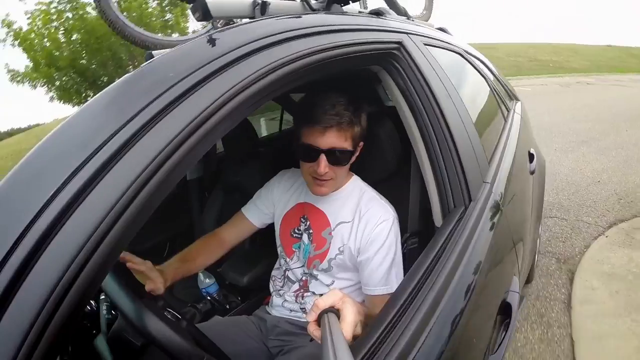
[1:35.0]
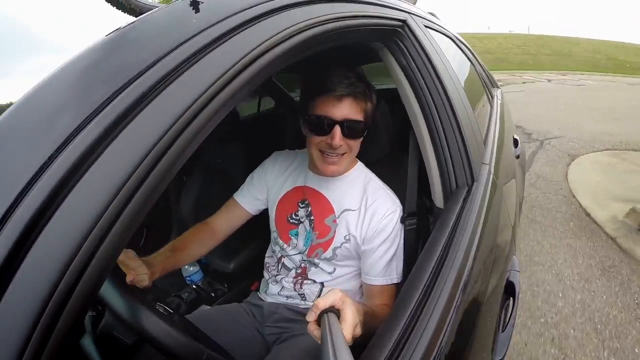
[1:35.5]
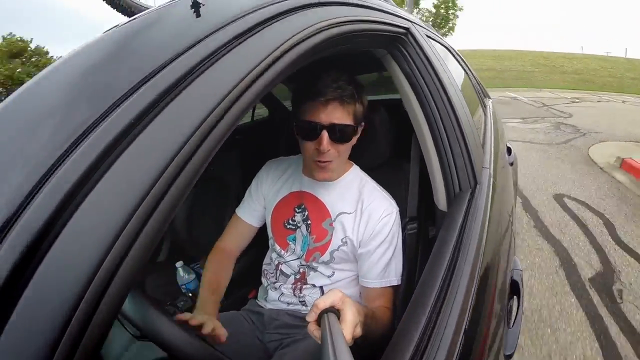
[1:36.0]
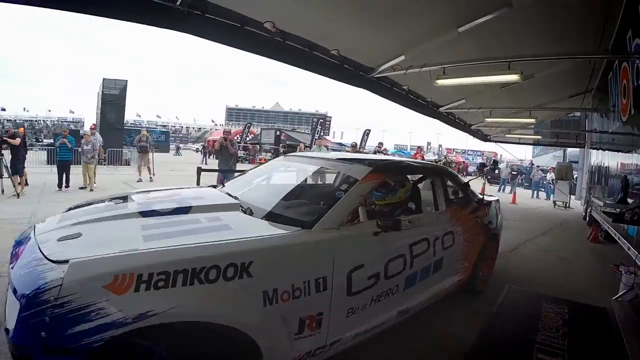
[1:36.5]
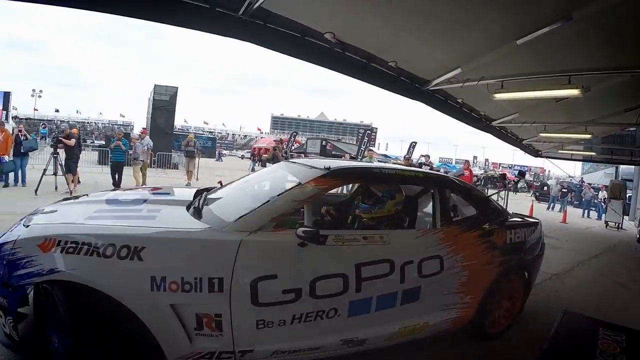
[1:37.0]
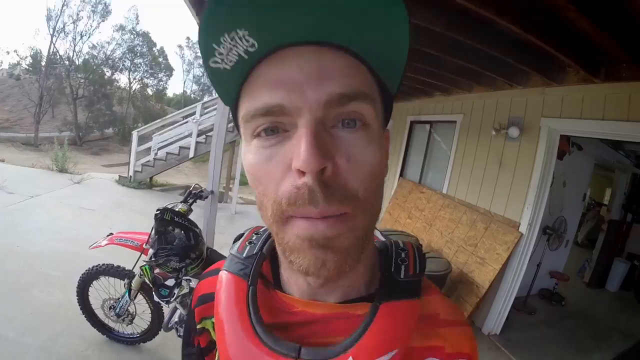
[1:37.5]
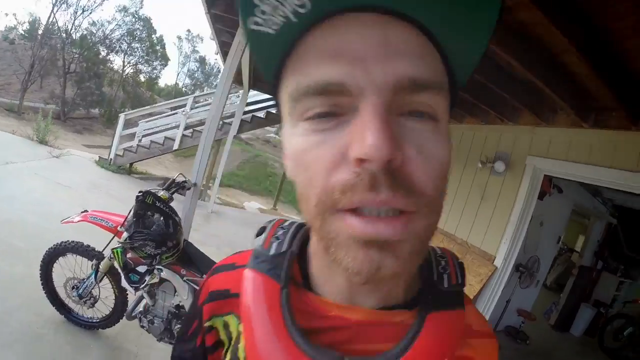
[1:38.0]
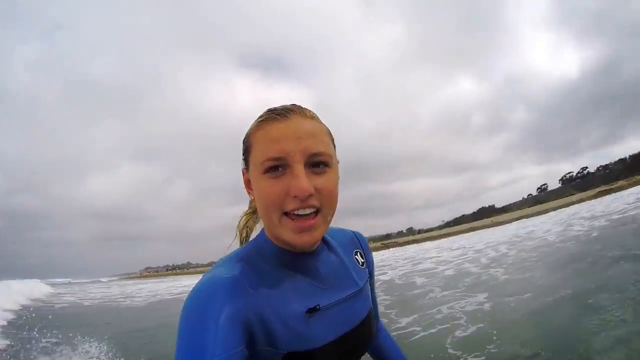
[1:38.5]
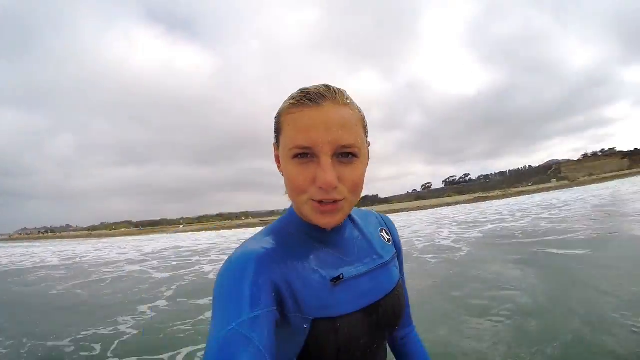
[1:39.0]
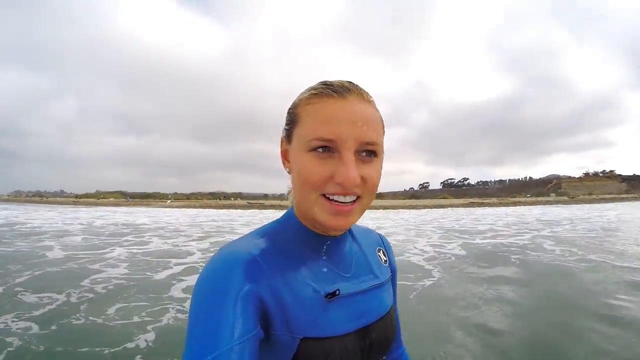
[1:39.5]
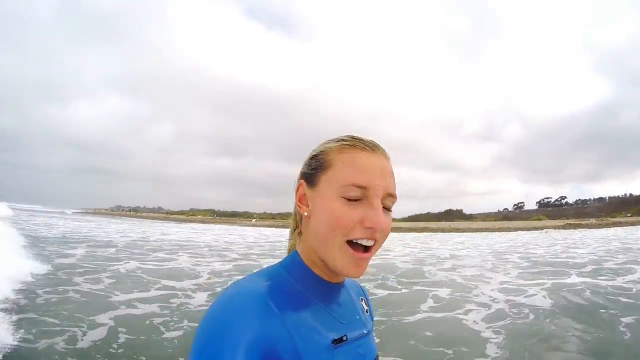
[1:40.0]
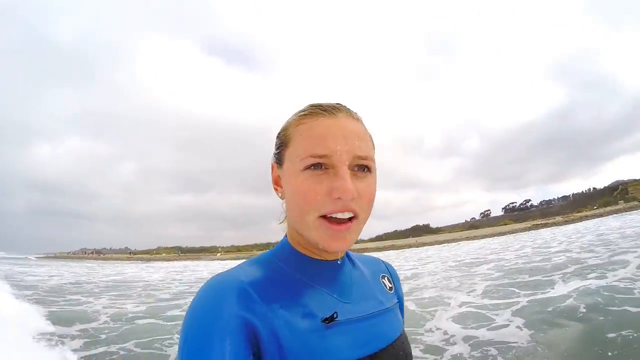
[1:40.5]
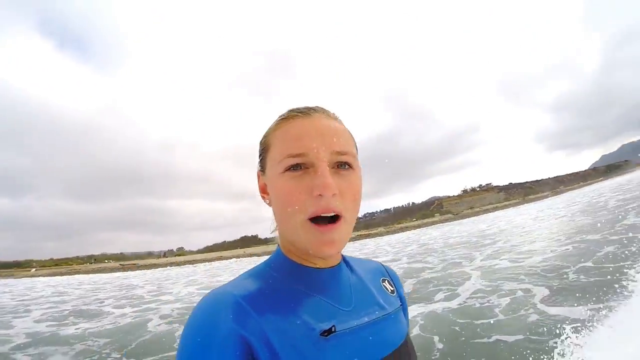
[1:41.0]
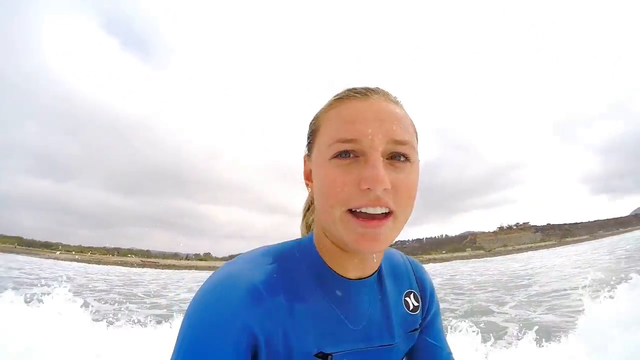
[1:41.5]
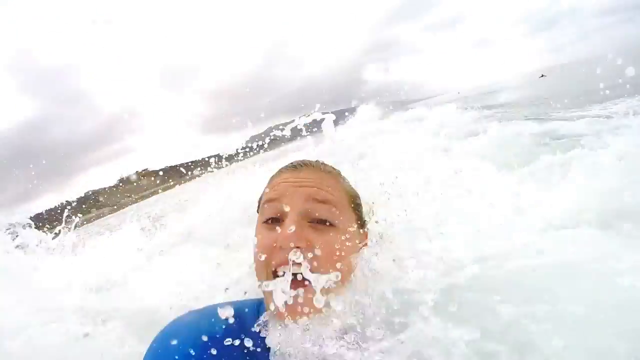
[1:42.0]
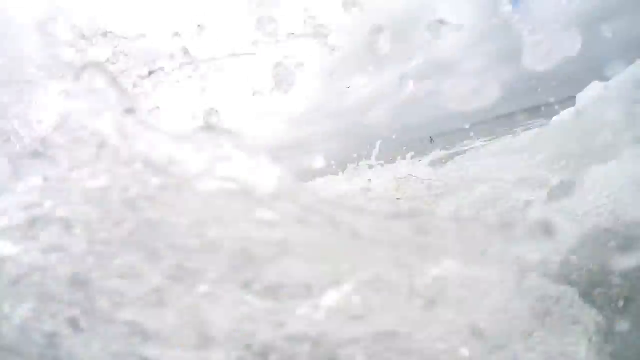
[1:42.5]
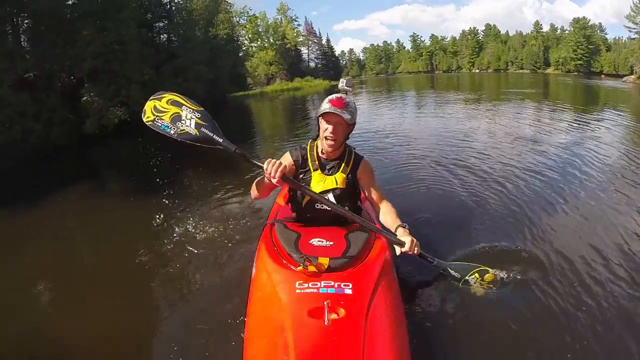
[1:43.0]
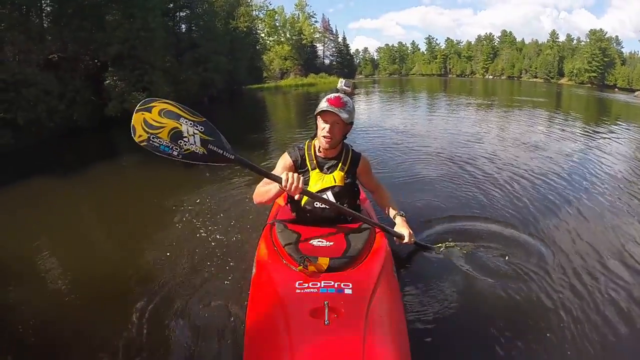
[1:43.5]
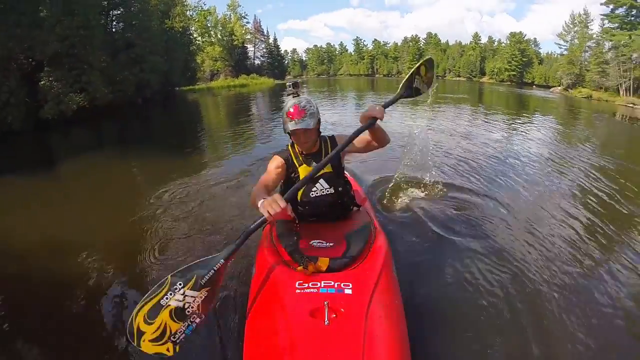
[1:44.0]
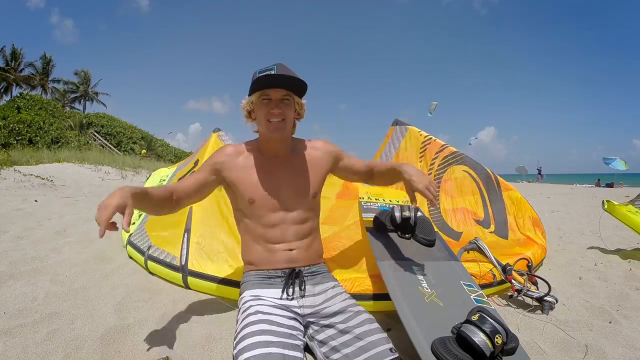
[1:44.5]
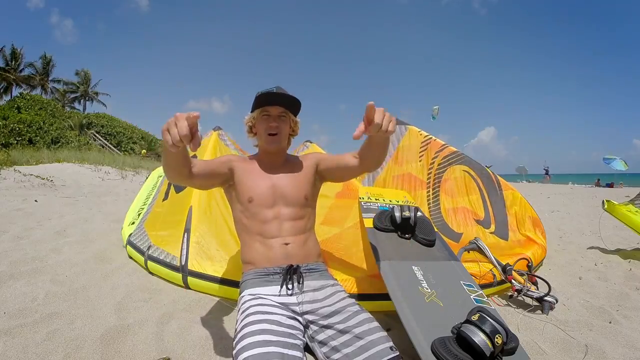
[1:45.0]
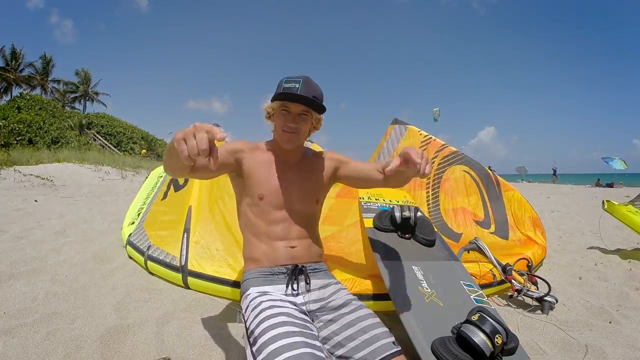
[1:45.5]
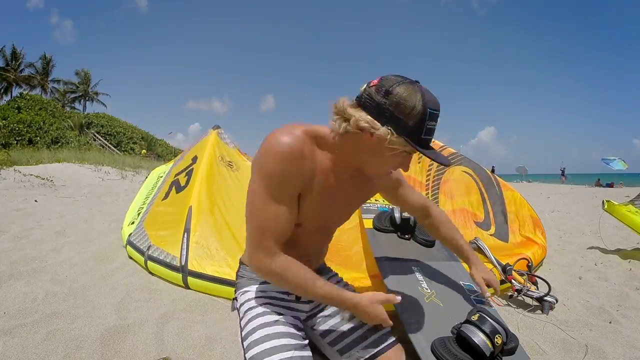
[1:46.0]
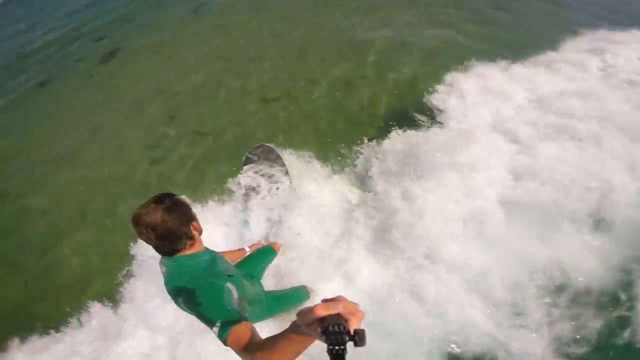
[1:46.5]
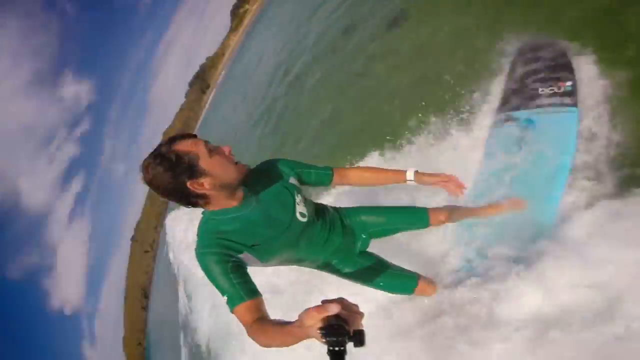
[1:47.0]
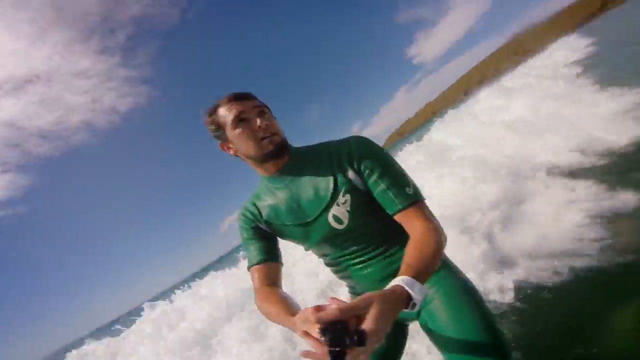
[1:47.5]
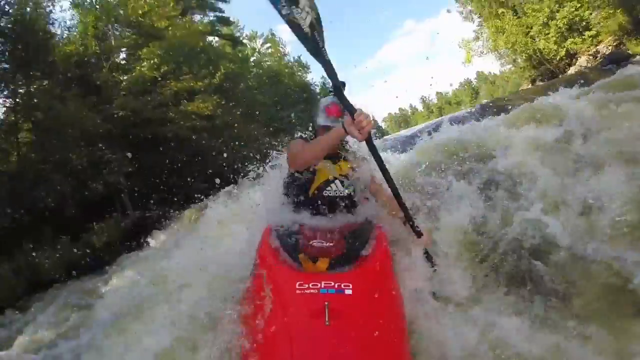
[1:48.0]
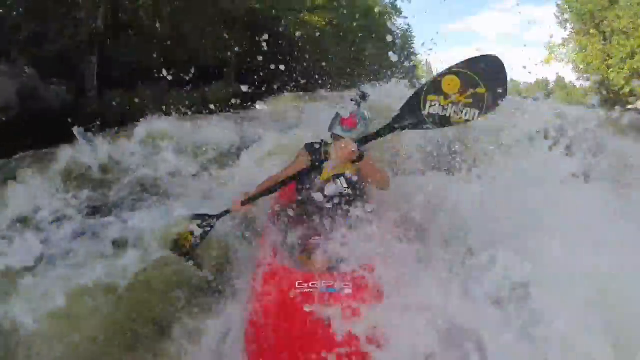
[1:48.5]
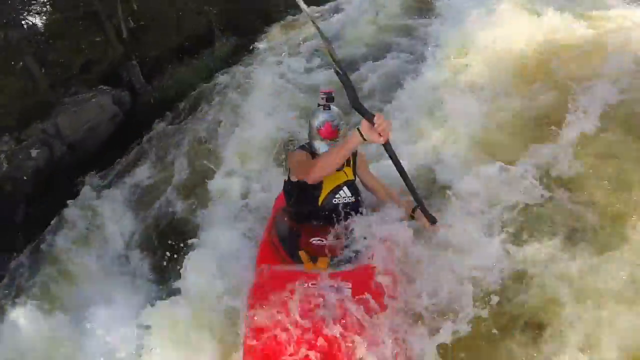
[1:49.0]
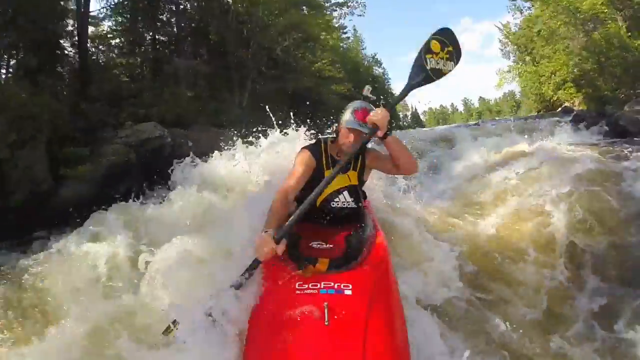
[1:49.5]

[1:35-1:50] Someone is driving a car; the guy wears shades and a white t-shirt with what looks like Japanese anime women on it. He holds a selfie stick with the GoPro pointed at him, and he seems to be on a racetrack. The camera pans back to the professional race driver, who has the GoPro logo on his car. The dirt biker appears, then a surfer wearing a Hurley full-body suit who is hit by crashing waves. The paddleboarder is still in the same shot, with a GoPro on his hat. The guy who is going paragliding is about to take off. Another surfer wears a full green bodysuit. The guy paddleboarding seems to be in a rough spot. The dirt biker is shown last.